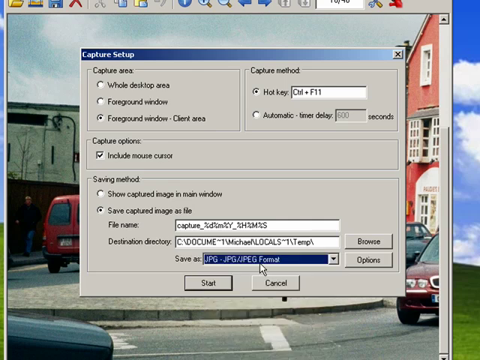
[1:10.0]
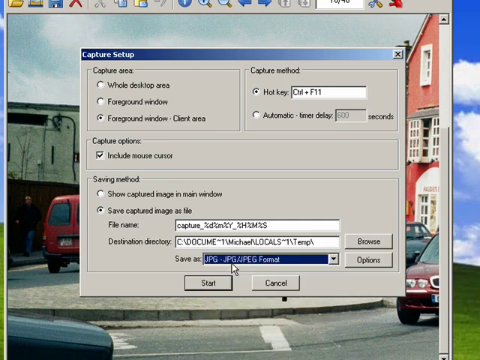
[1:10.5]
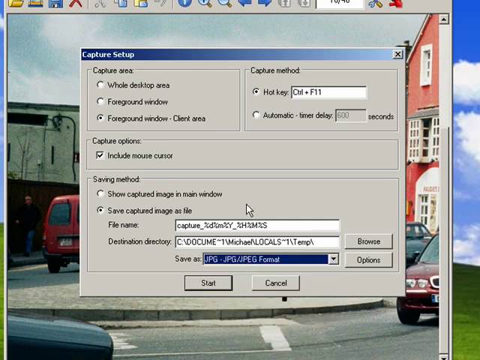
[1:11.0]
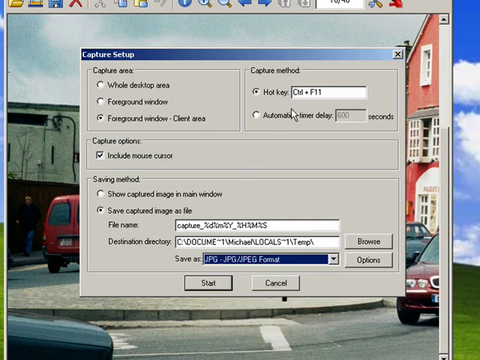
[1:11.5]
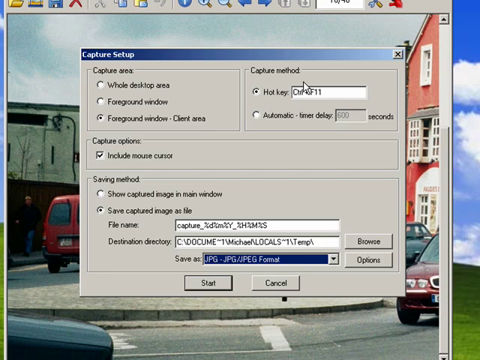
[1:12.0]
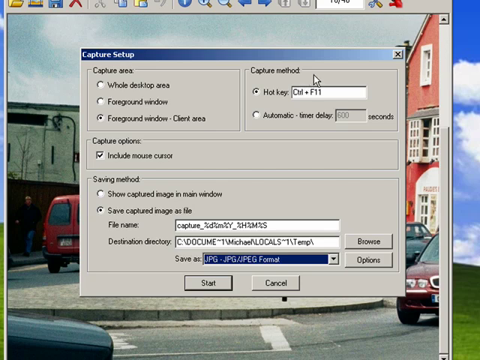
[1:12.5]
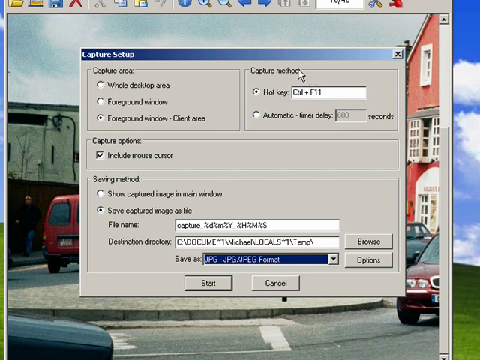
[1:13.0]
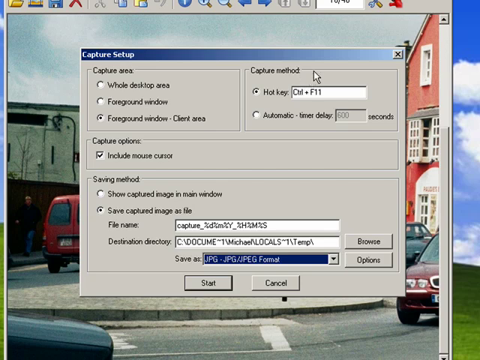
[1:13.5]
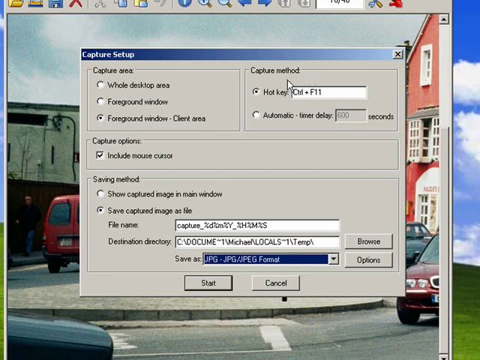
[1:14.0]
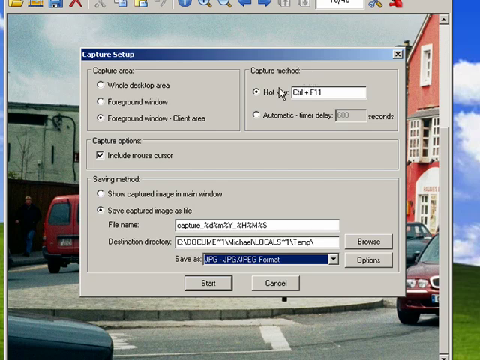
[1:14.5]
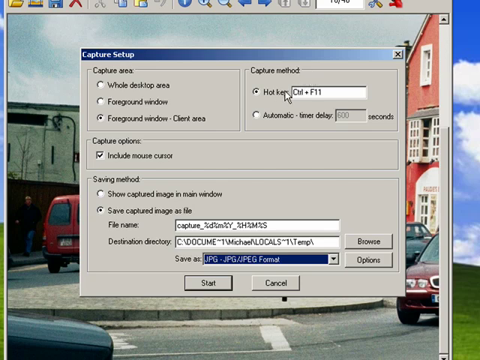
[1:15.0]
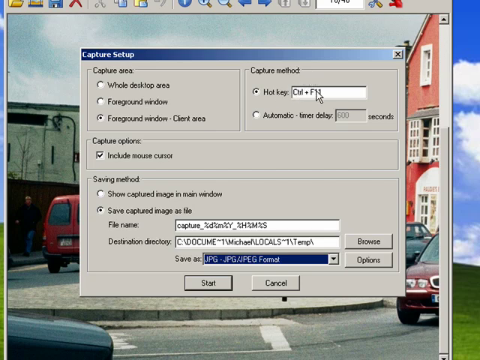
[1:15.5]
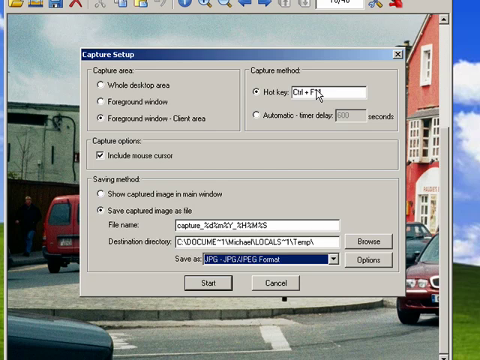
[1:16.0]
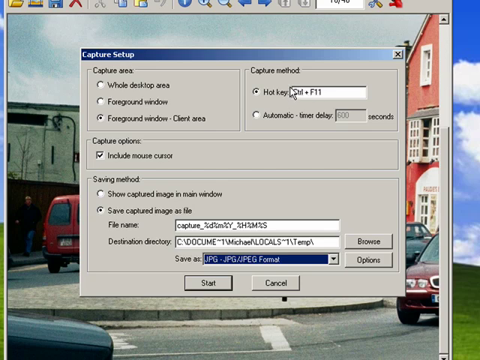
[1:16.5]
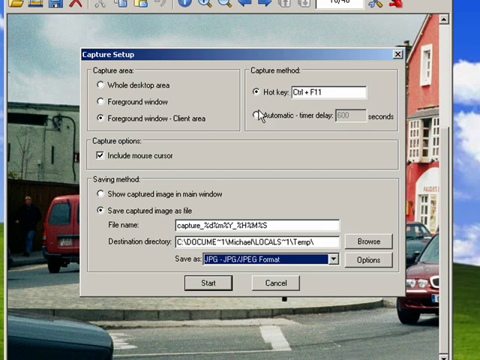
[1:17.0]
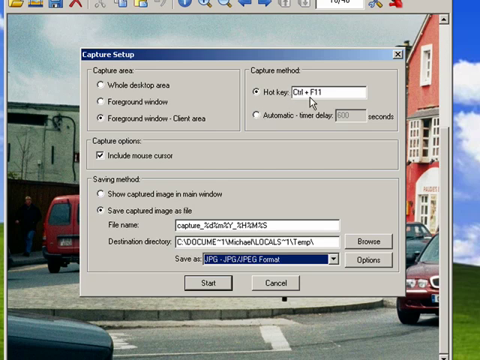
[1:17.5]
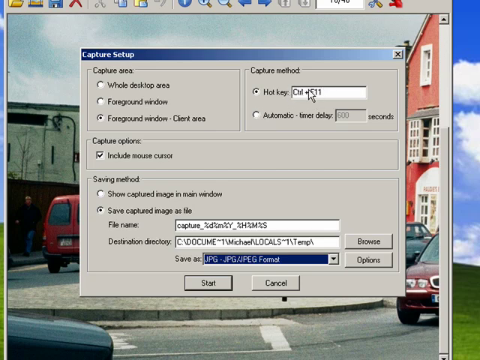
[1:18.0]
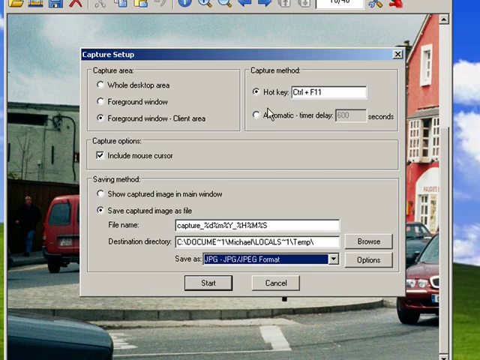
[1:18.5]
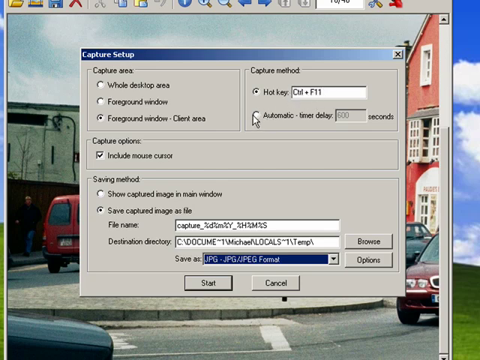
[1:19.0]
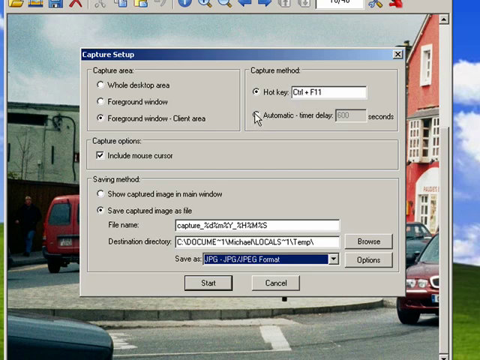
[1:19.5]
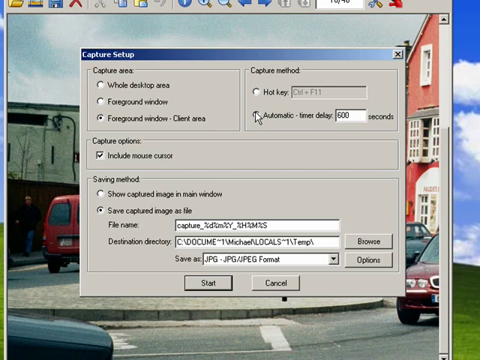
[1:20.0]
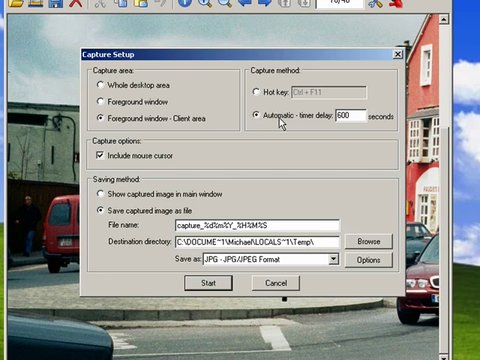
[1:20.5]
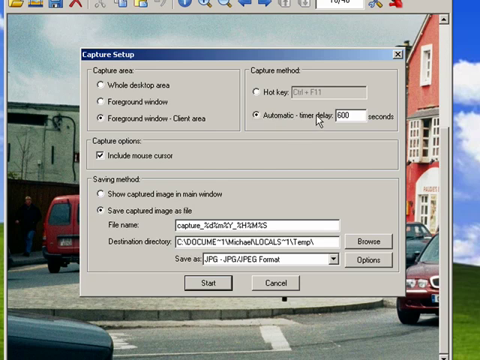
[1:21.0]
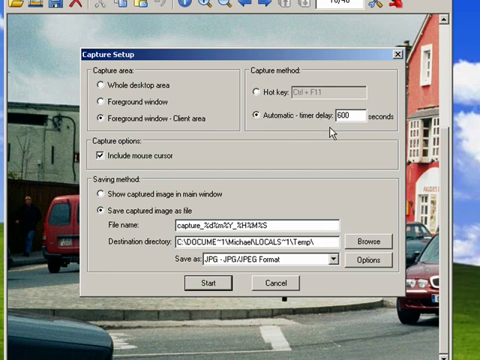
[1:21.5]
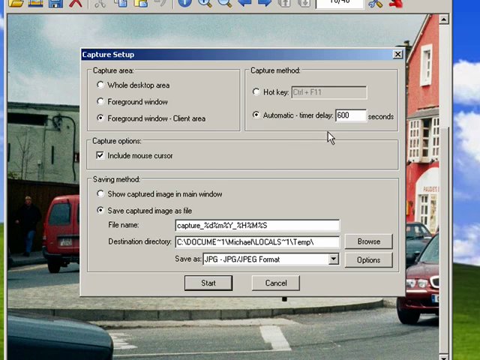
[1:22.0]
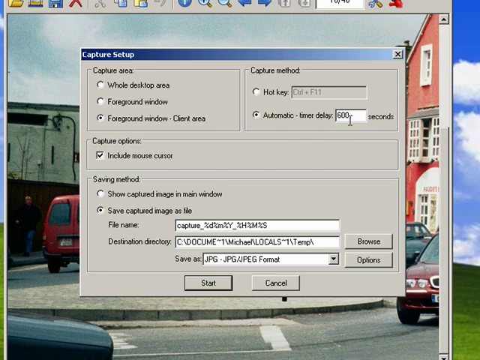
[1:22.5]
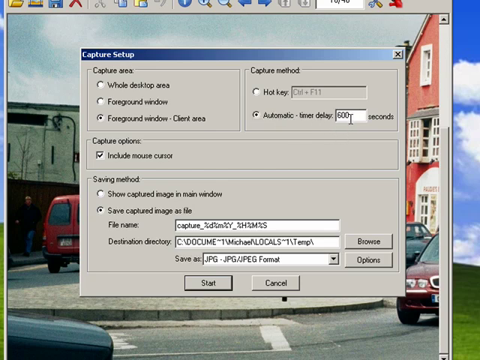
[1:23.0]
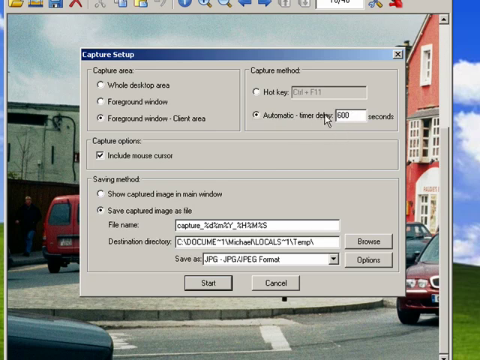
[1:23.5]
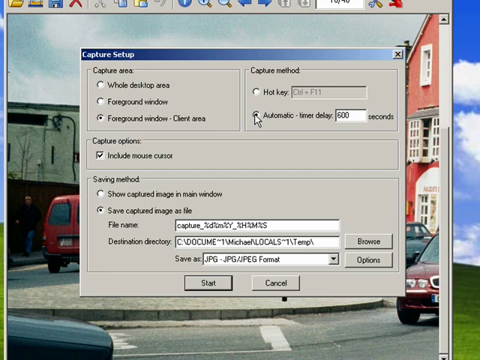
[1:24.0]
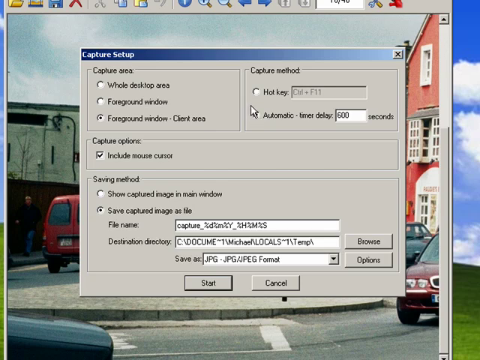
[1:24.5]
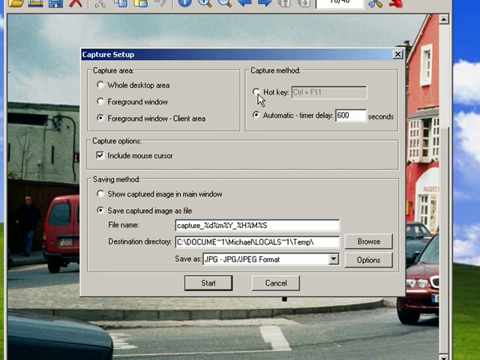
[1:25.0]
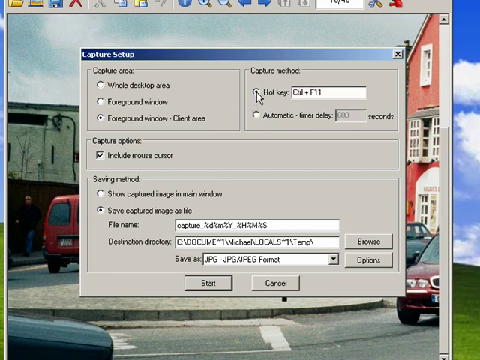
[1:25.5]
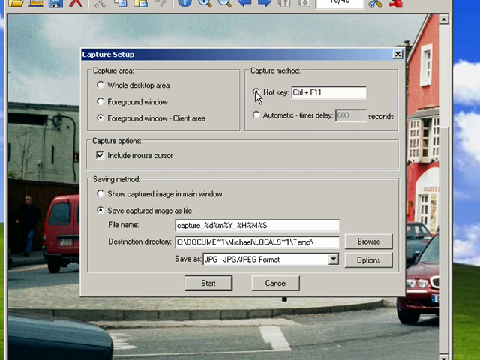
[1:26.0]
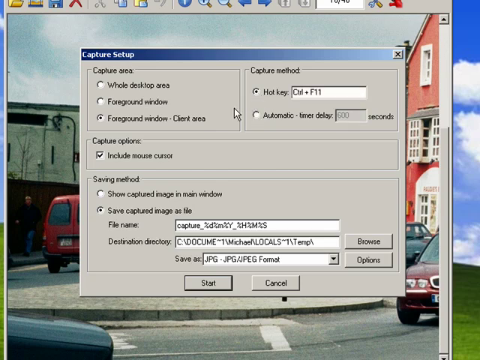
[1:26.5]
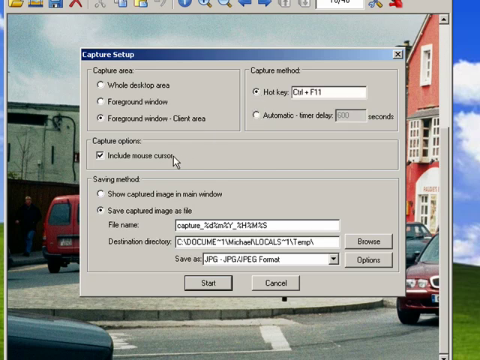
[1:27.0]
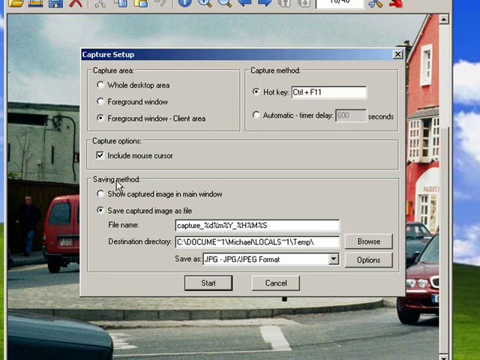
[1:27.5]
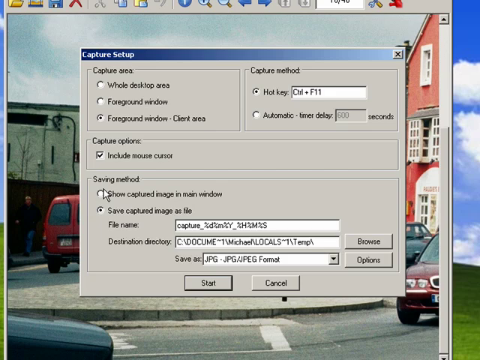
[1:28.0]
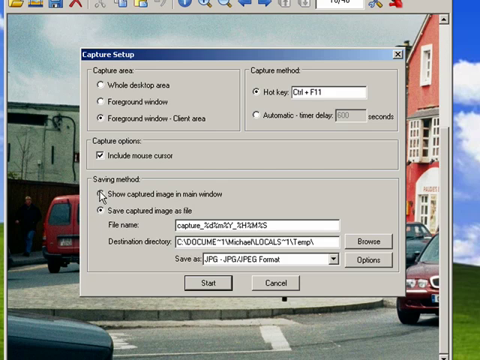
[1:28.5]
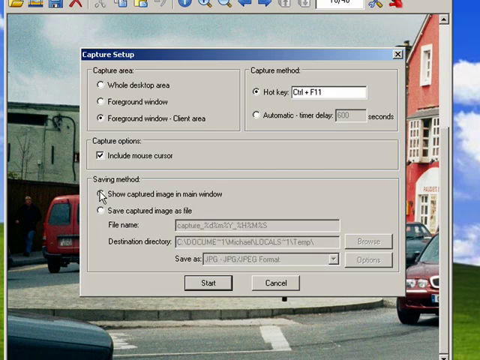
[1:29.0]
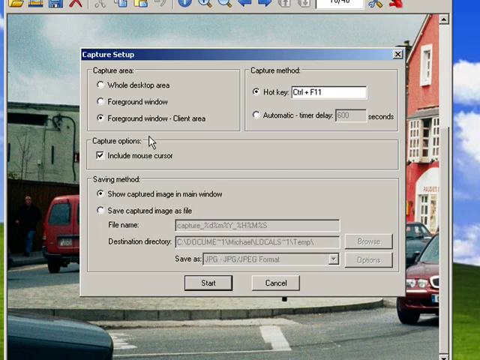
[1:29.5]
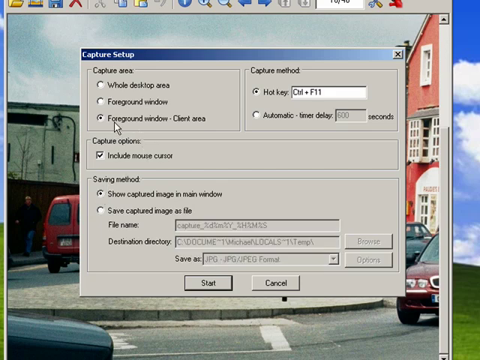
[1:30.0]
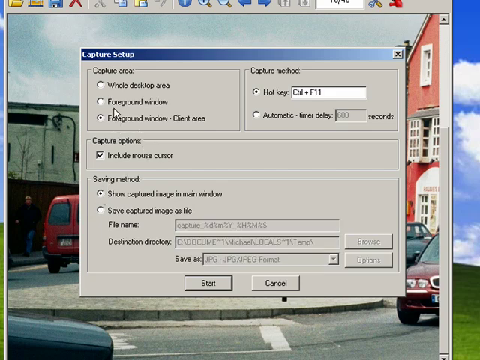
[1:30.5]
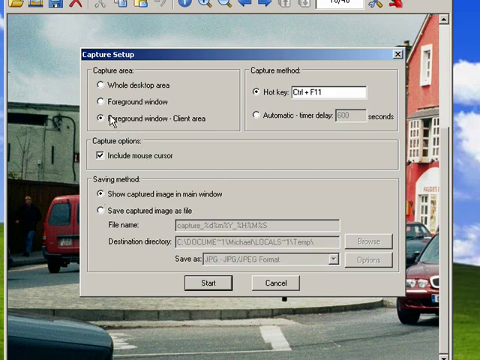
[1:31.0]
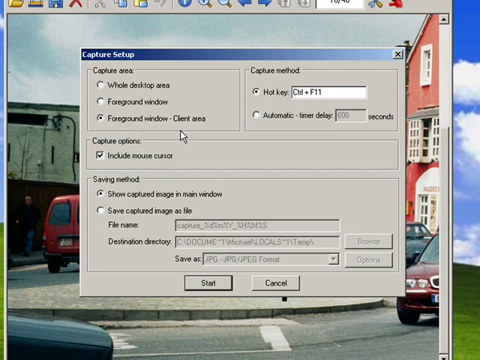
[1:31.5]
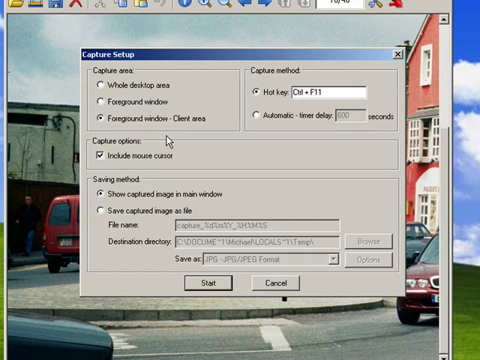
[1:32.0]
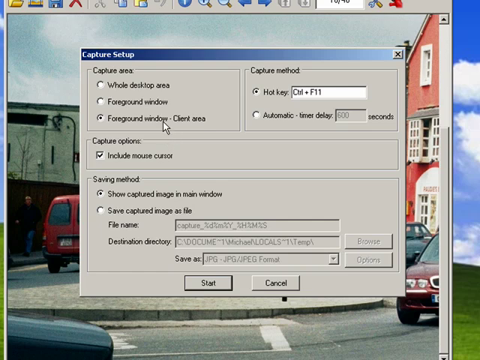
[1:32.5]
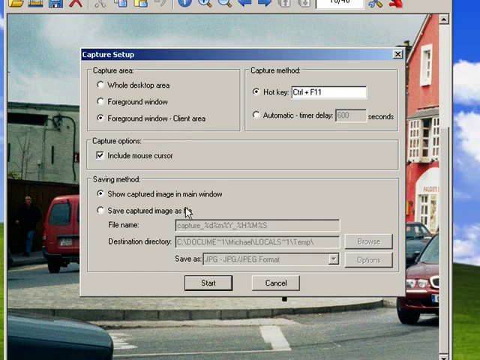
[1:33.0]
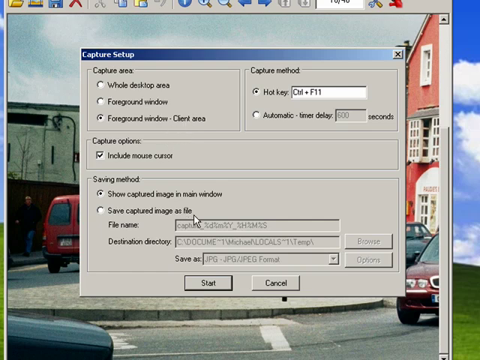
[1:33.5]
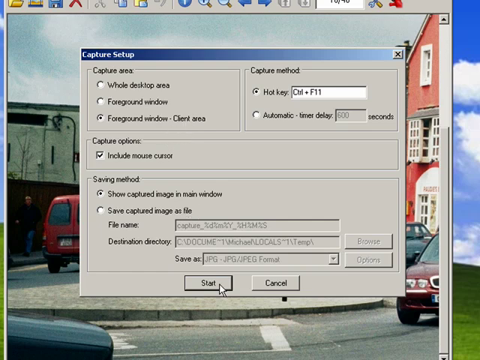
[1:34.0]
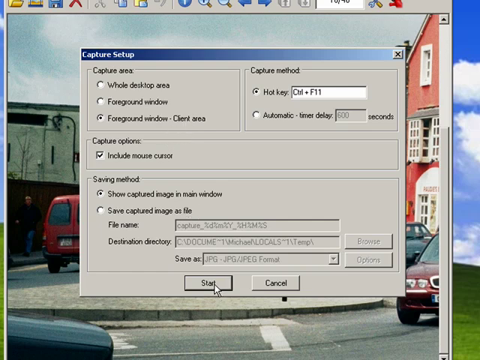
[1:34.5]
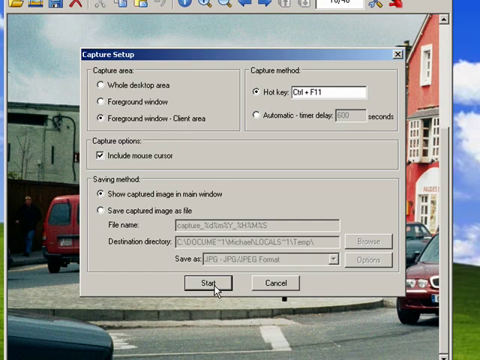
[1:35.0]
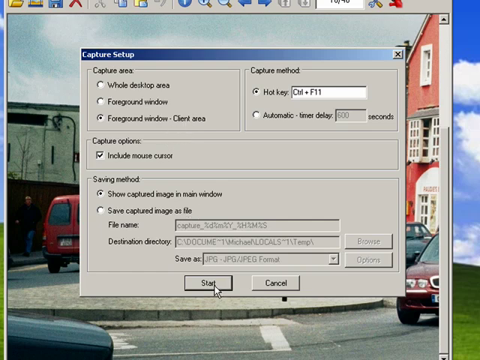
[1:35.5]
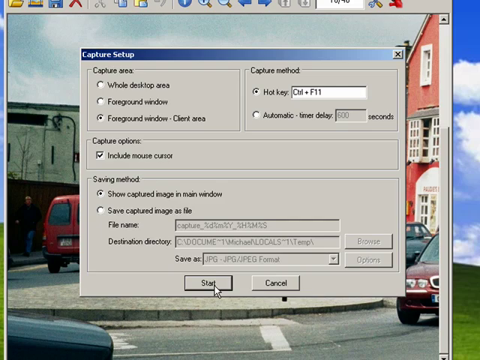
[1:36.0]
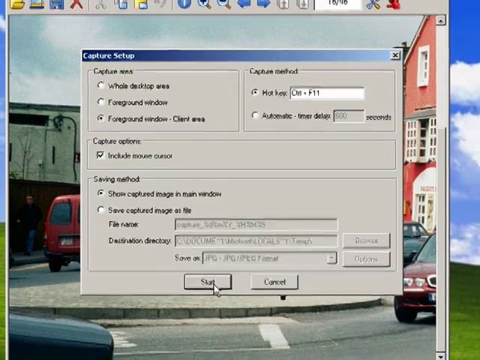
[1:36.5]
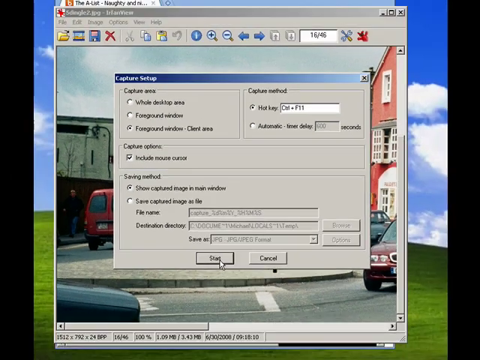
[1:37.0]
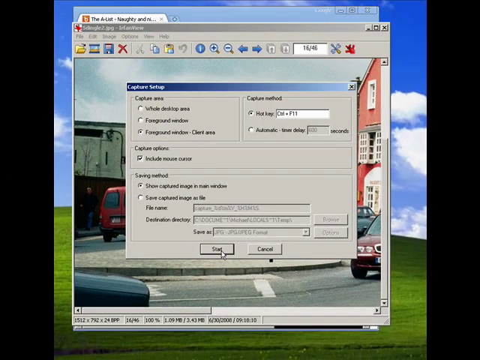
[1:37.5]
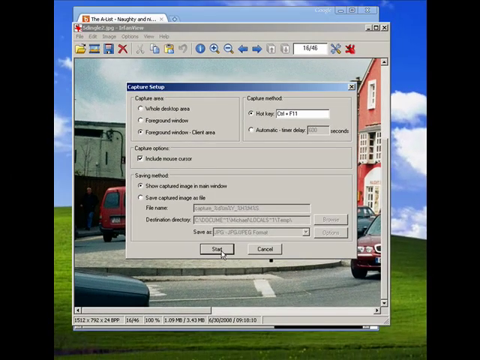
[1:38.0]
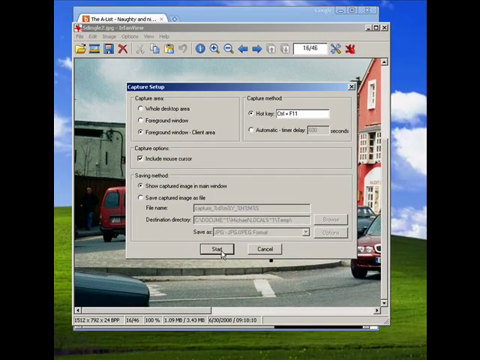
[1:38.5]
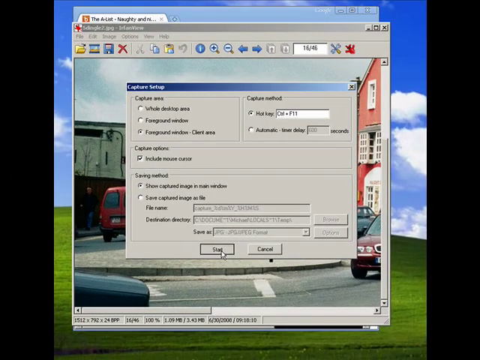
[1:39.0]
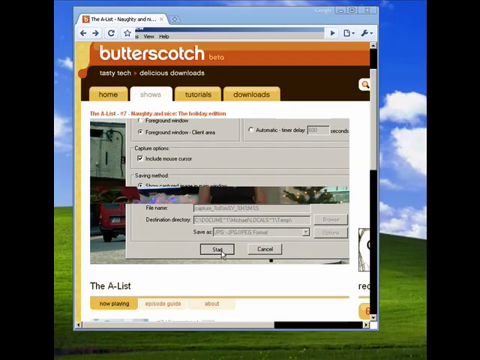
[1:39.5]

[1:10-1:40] At the bottom of the screen, where it says "Save as", the format is highlighted in blue after JPEG has just been selected from the drop-down menu. The mouse then hovers over the capture method area at the top right of the capture settings window, over the hotkey option, which is checked, with "ctrl plus f11" in its box. The mouse clicks on the setting underneath, "Automatic timer delay", whose box says "0 0 0 seconds", then re-clicks the hotkey option above it, selecting it. The mouse hovers over the capture option settings, then the capture area settings, and then goes to the bottom and hovers over the Start button. The screen zooms back out, showing the desktop background and the image in its entirety, with the window still open.